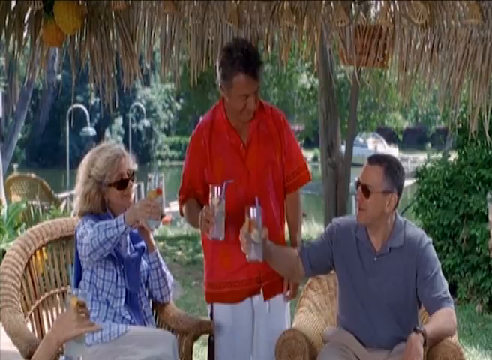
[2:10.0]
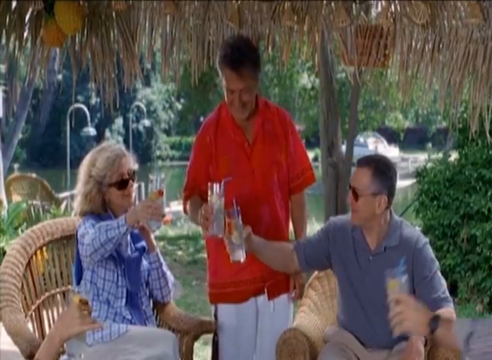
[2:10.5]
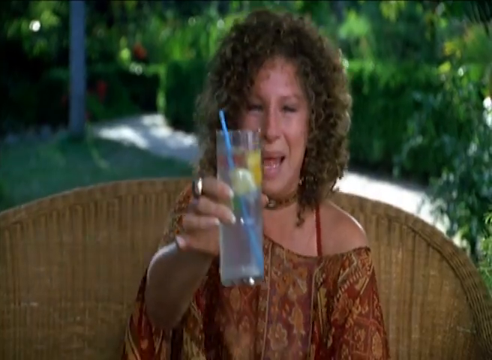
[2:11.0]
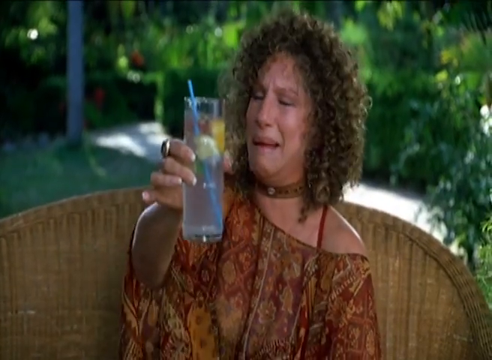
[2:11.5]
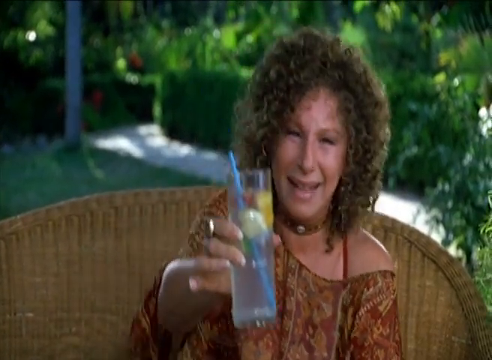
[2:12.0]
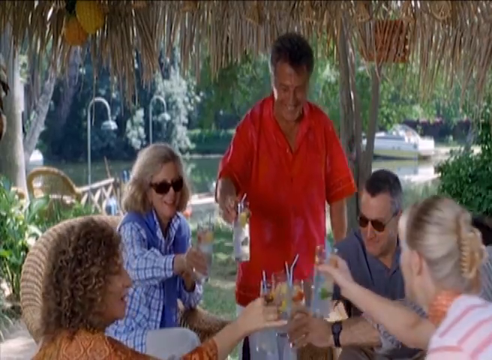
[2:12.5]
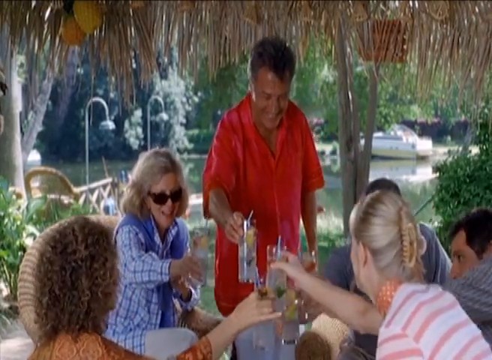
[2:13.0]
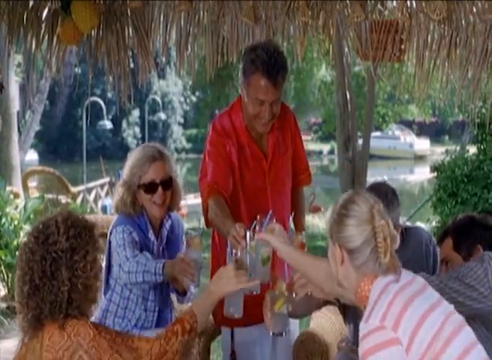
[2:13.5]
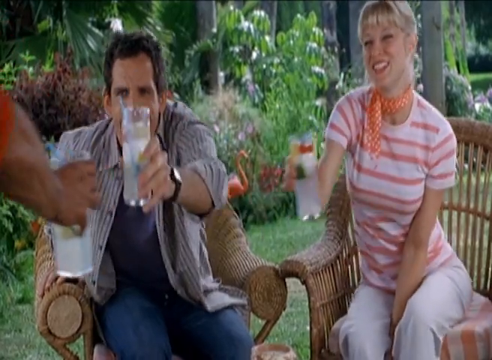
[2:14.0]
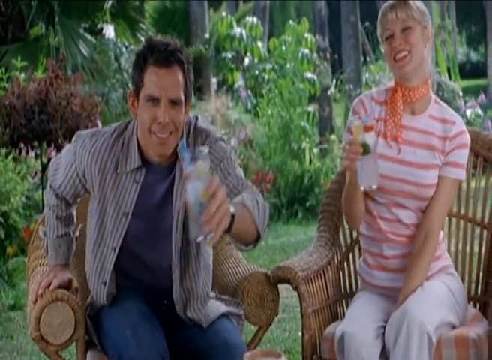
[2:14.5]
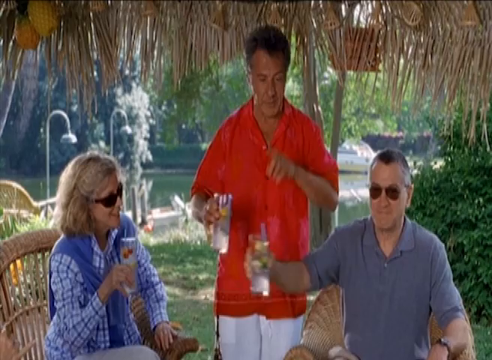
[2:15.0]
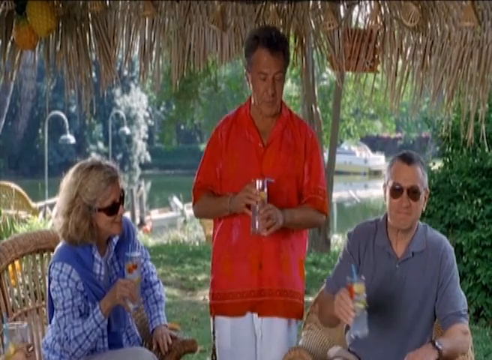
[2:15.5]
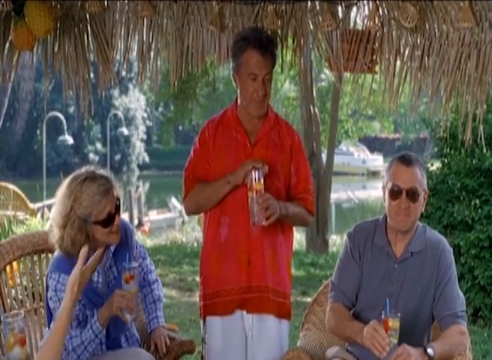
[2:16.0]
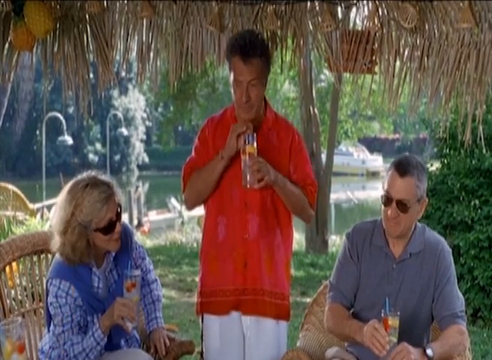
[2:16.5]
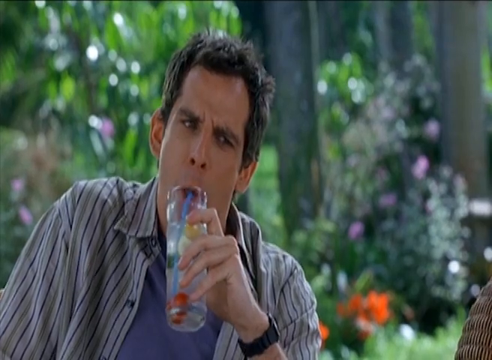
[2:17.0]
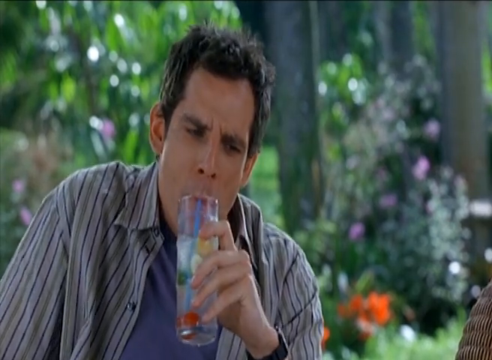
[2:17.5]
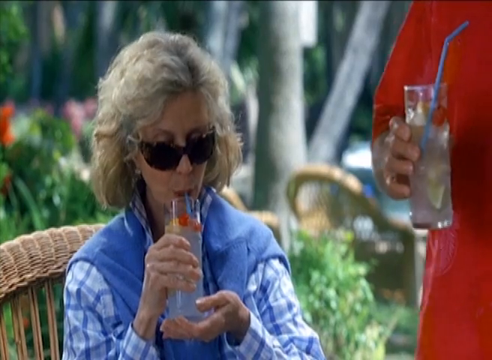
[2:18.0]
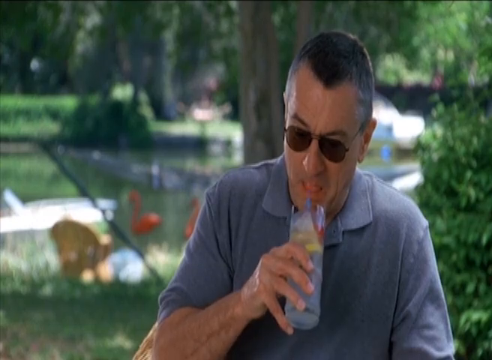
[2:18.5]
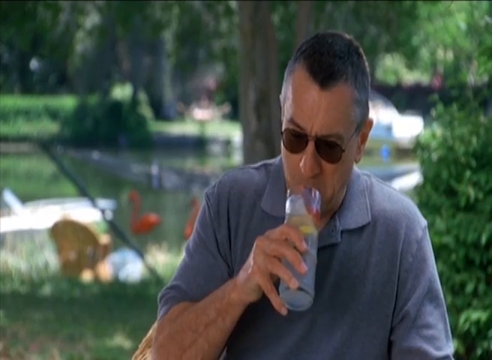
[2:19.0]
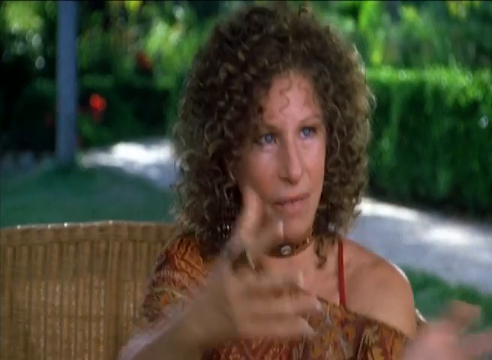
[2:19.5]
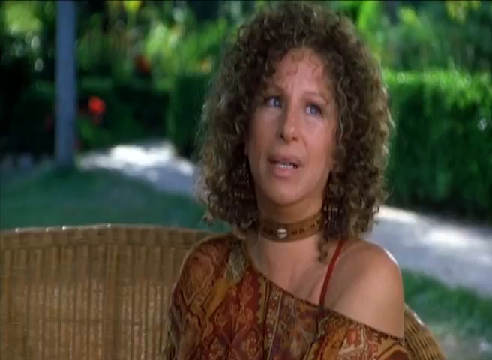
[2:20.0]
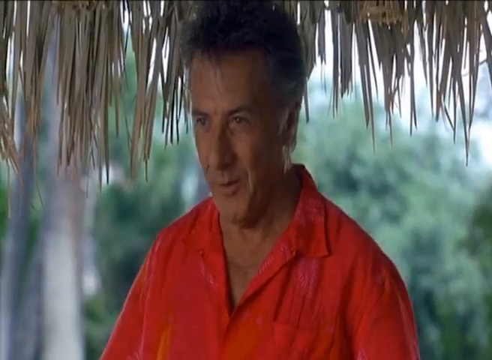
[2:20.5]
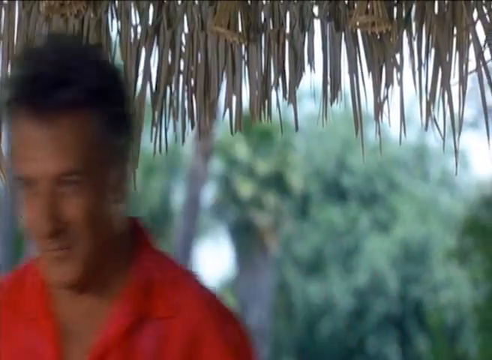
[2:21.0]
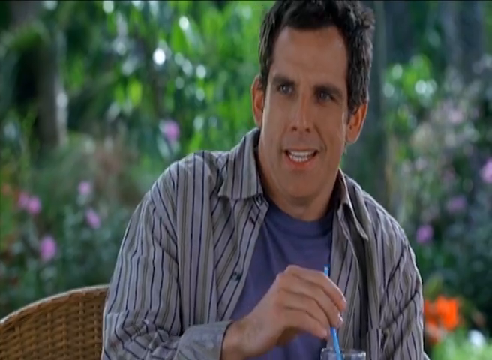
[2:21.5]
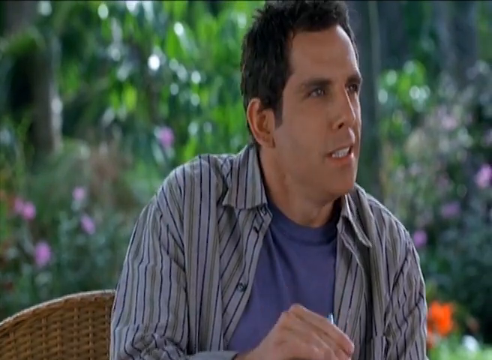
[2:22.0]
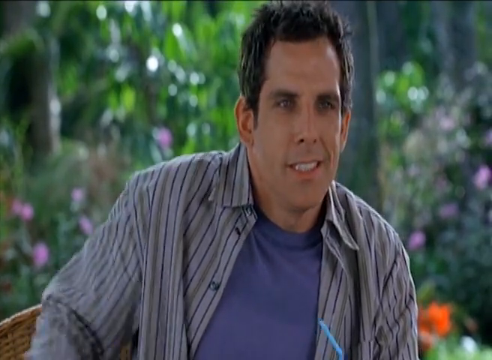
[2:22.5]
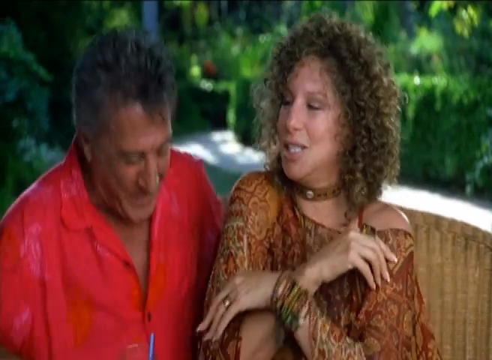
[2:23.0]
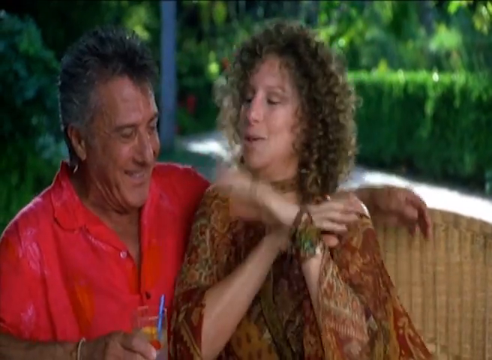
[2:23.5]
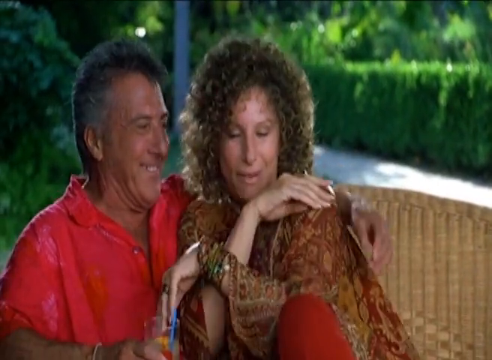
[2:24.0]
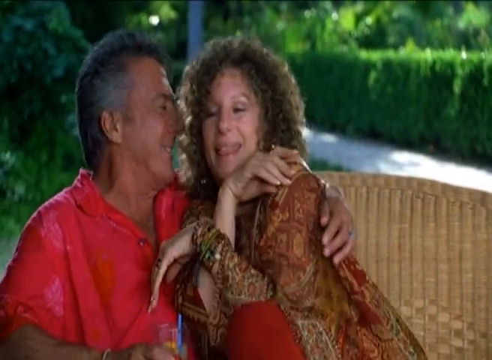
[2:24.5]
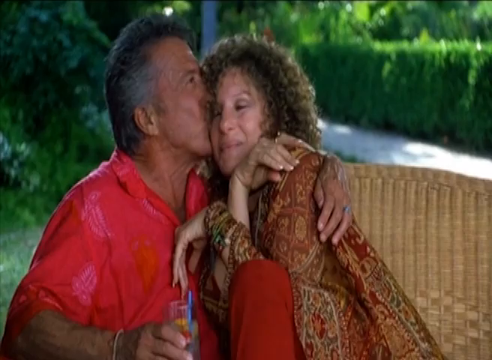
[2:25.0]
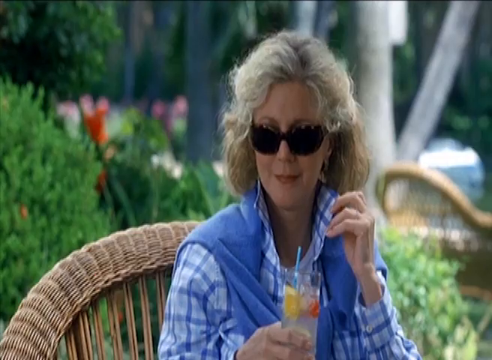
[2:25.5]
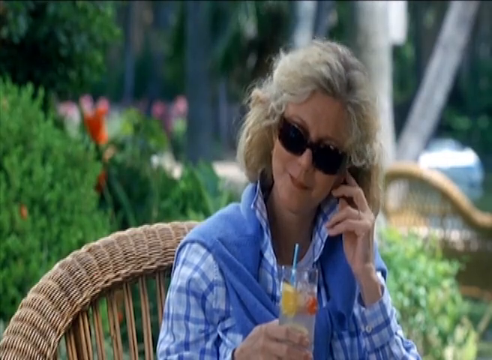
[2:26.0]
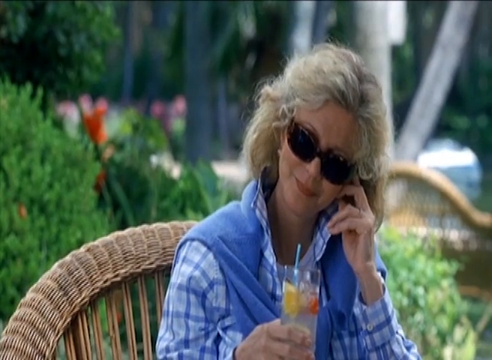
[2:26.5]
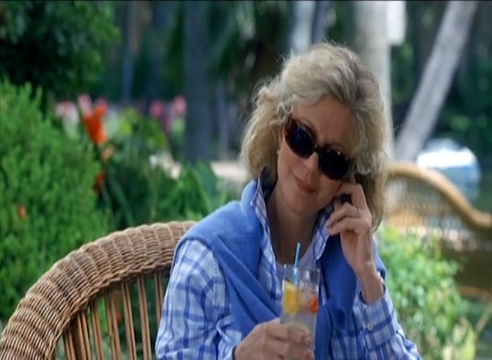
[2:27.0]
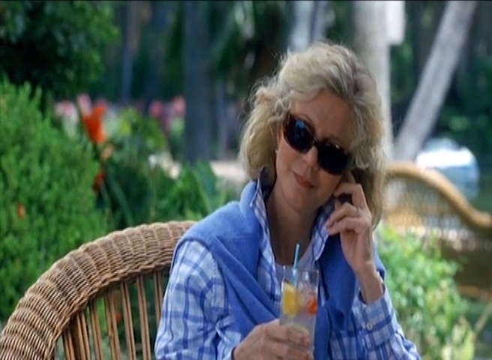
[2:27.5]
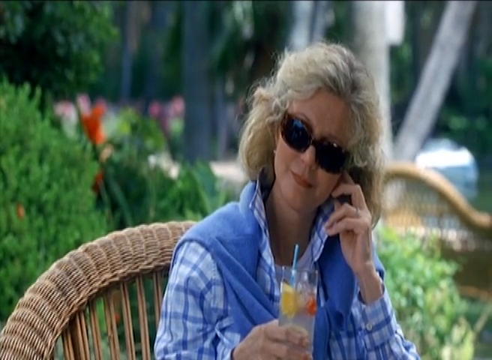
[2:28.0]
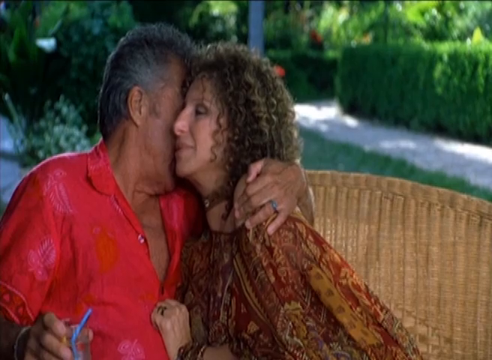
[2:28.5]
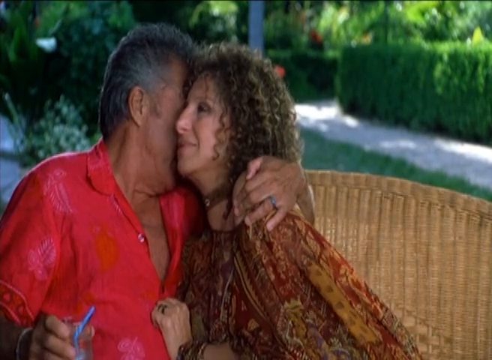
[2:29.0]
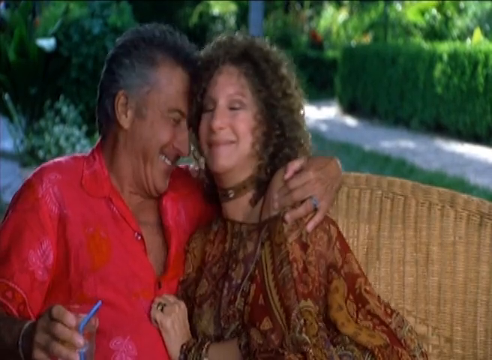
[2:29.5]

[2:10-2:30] The older man in the red shirt stands between the older lady with glasses and the older man with glasses, doing cheers with their drinks. The older lady with curls seems very happy, raising her glass with her right hand. The group cheers, touching their drinks together. The young couple both hold their glasses, touch them to the other people's glasses, and then both lean back. The older man in red, still standing between the older lady with glasses and the older man with glasses, seems very happy, almost talking, then sips his drink. The younger man sips his drink, then the older lady with glasses sips hers, then the older man with glasses sips his. The older lady with curls looks like she is talking, and the man in red seems to talk back to her. The younger man talks. An older man, now seated beside the older lady with curls, snuggles toward her and kisses her on the forehead. The older lady with glasses tilts her head, looking like she is looking at them, and touches her left ear with her left hand. The older man in the red shirt and the older lady with curls embrace, and he seems to be whispering something to her.